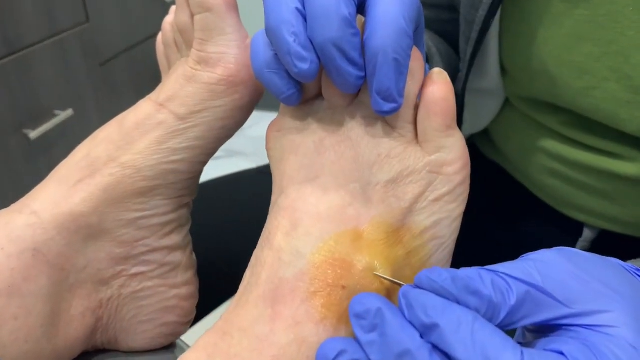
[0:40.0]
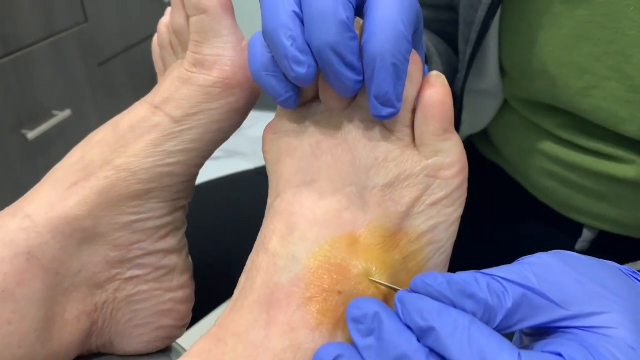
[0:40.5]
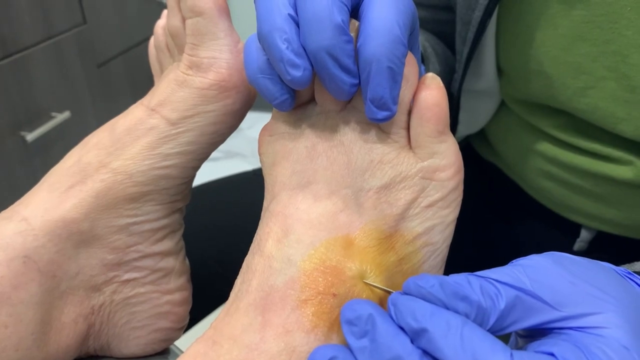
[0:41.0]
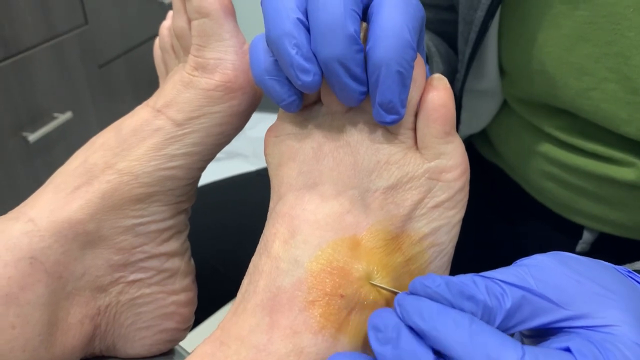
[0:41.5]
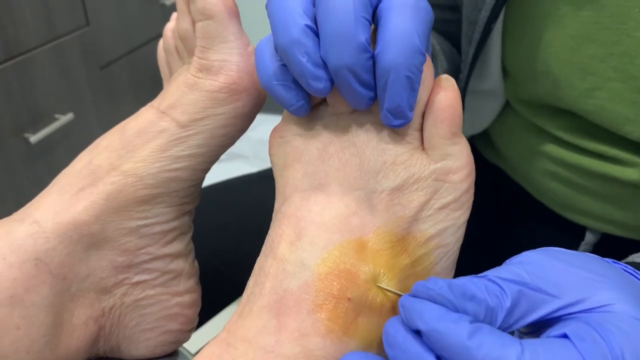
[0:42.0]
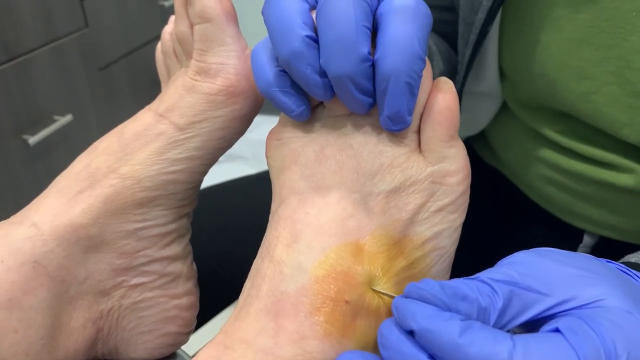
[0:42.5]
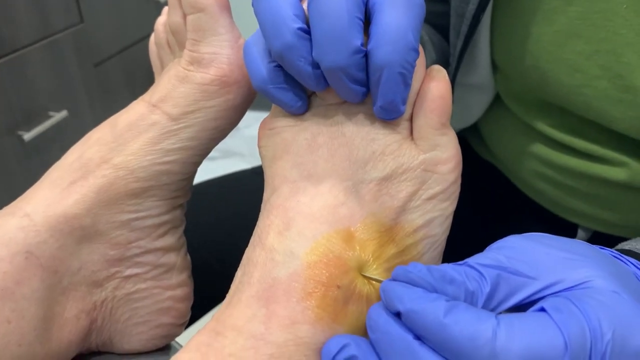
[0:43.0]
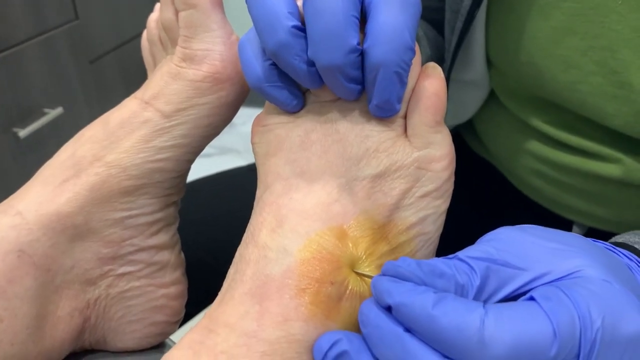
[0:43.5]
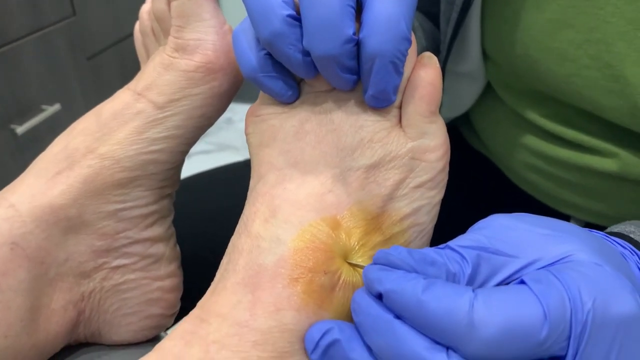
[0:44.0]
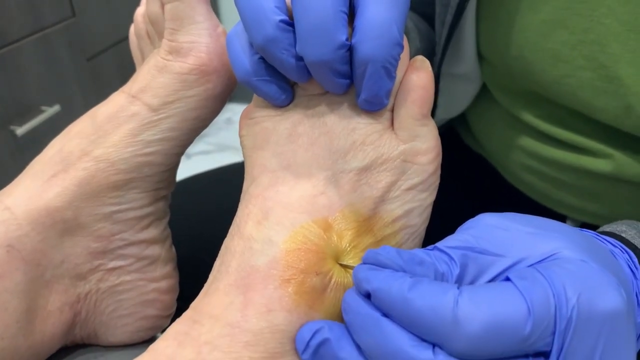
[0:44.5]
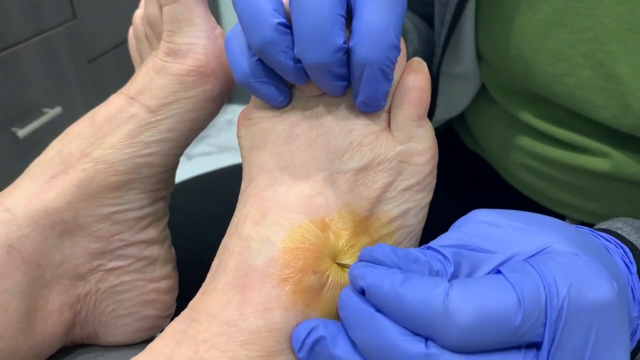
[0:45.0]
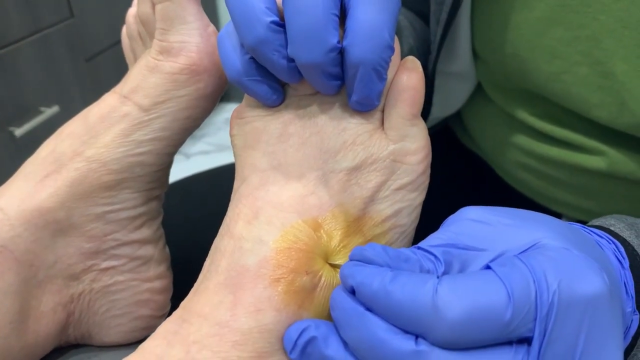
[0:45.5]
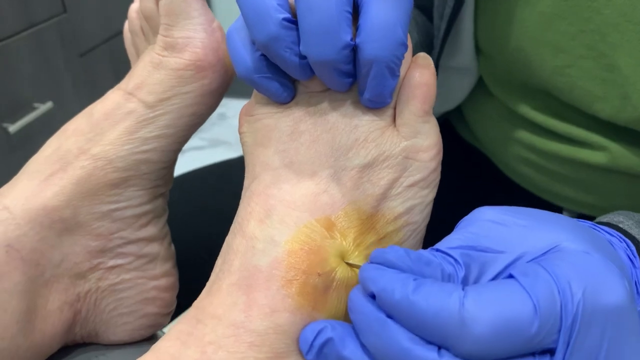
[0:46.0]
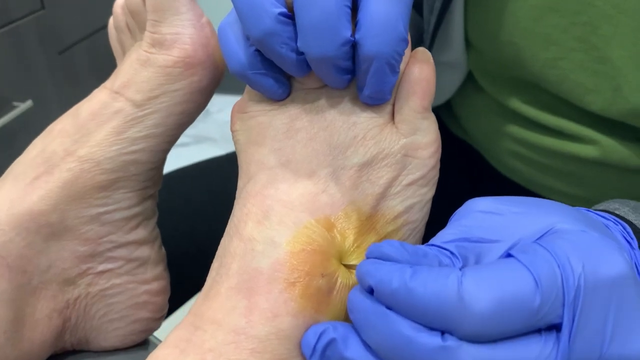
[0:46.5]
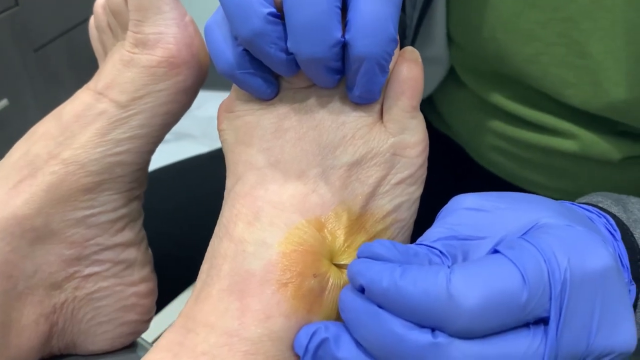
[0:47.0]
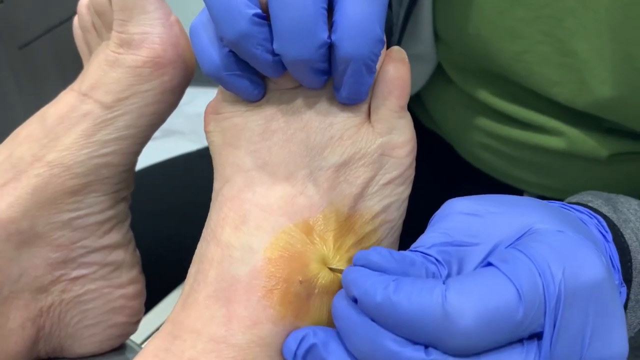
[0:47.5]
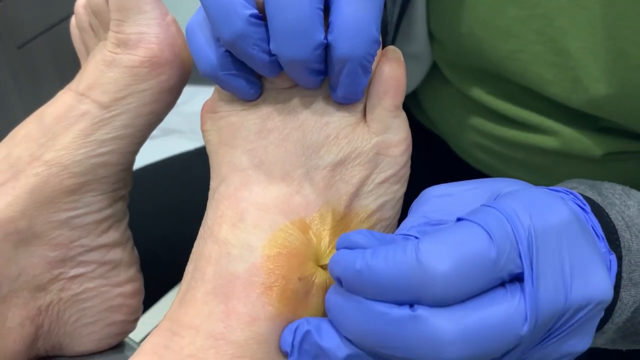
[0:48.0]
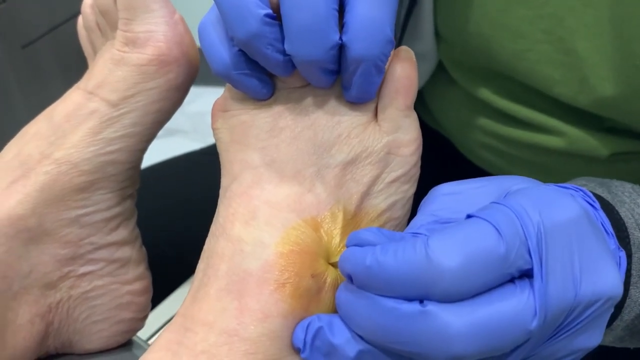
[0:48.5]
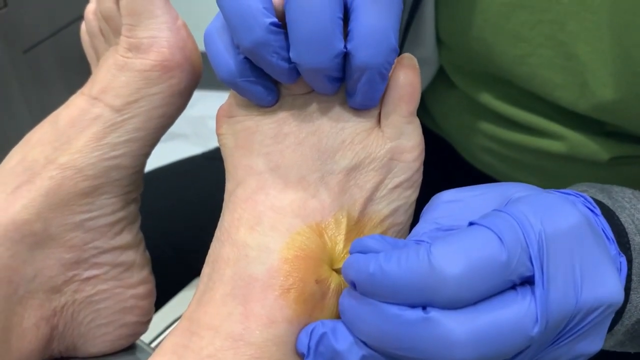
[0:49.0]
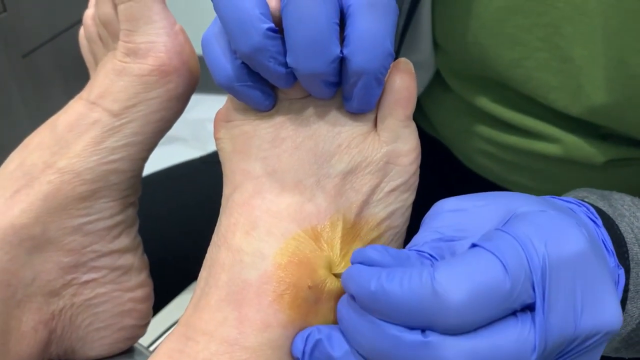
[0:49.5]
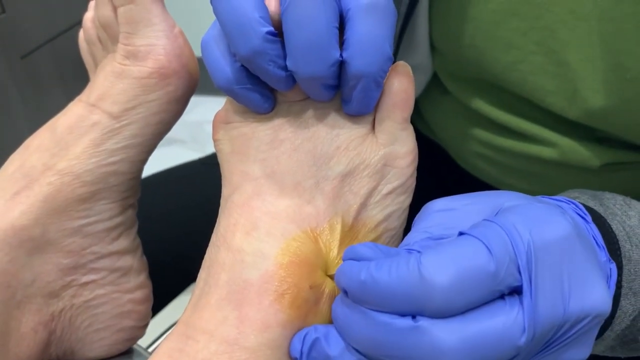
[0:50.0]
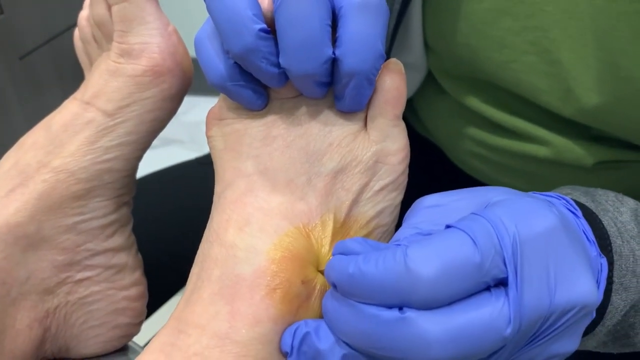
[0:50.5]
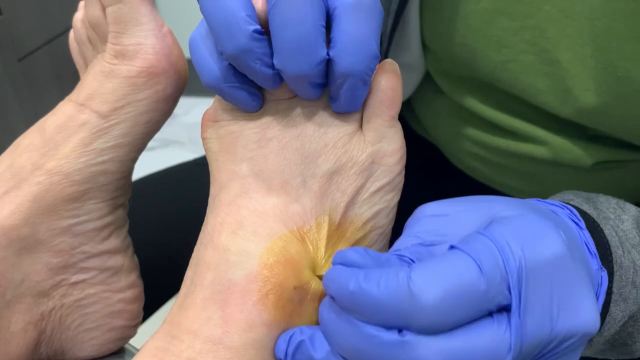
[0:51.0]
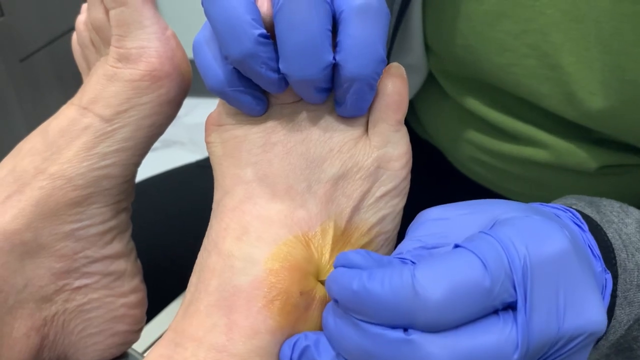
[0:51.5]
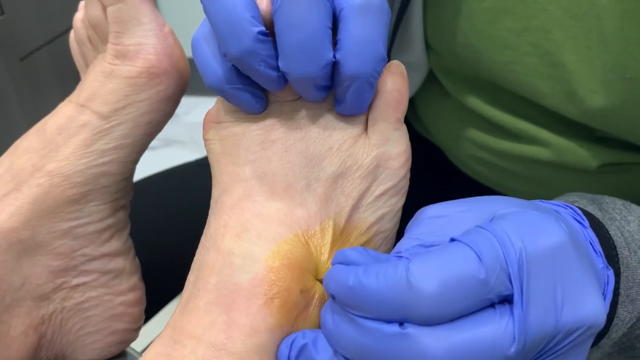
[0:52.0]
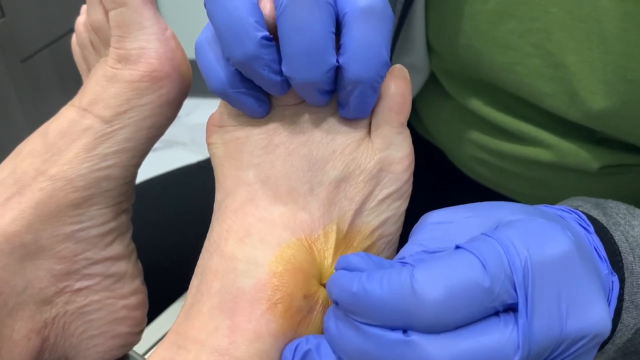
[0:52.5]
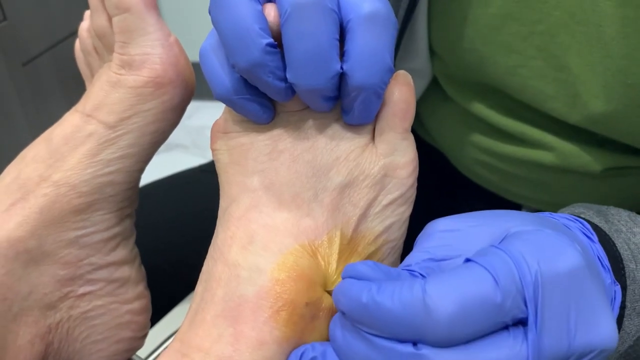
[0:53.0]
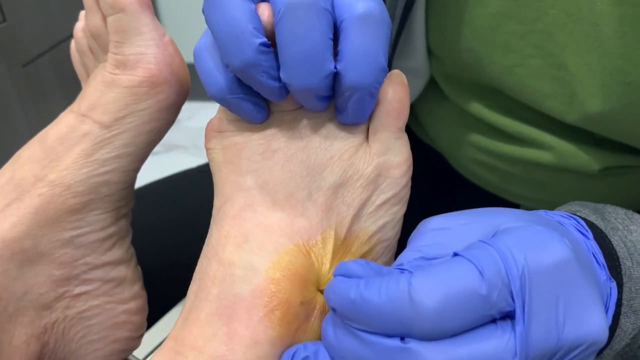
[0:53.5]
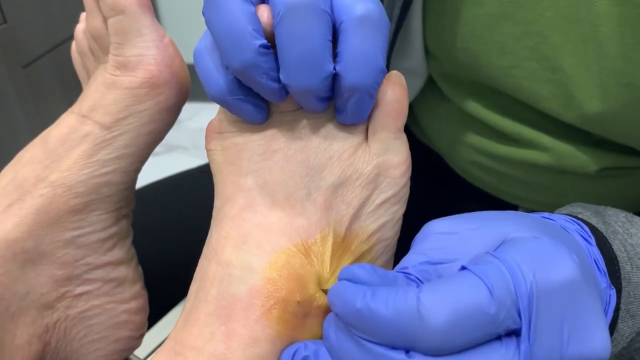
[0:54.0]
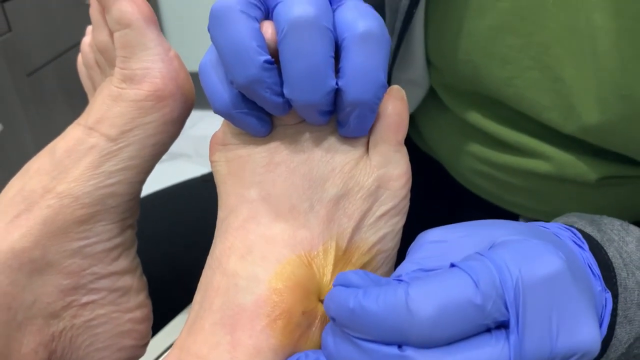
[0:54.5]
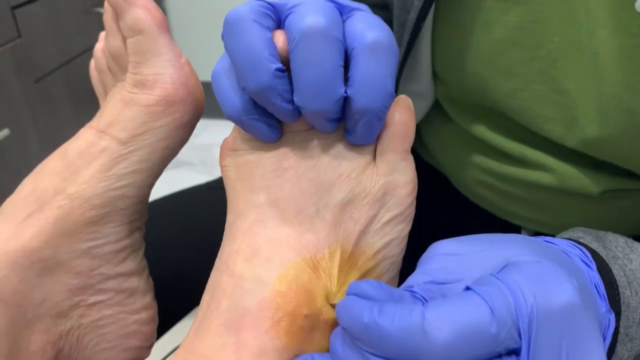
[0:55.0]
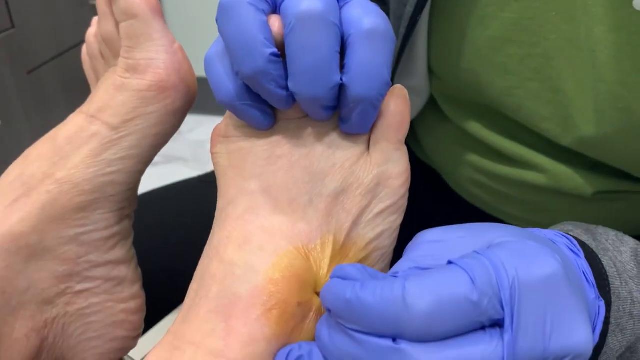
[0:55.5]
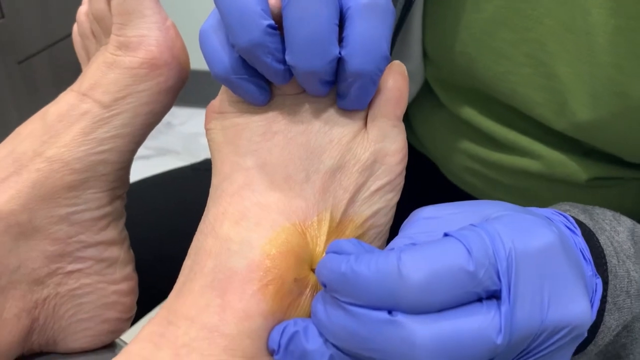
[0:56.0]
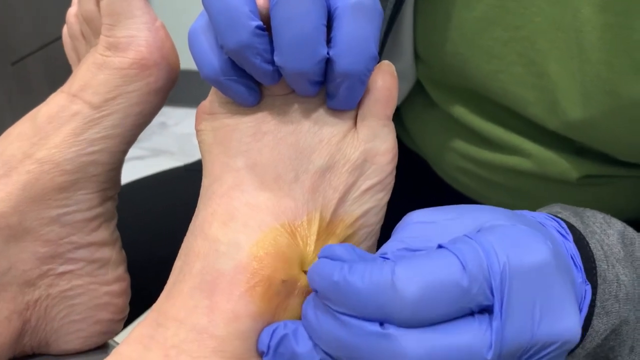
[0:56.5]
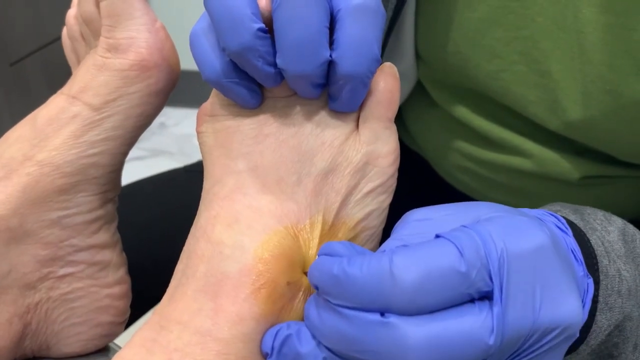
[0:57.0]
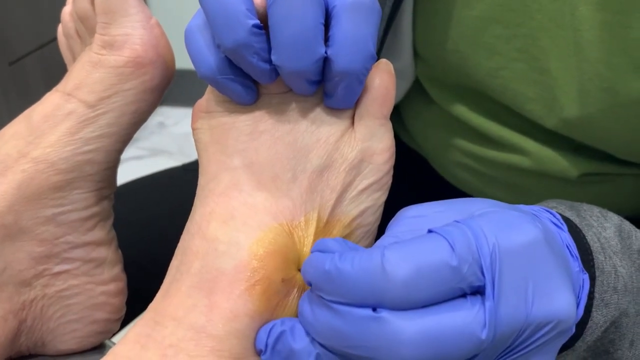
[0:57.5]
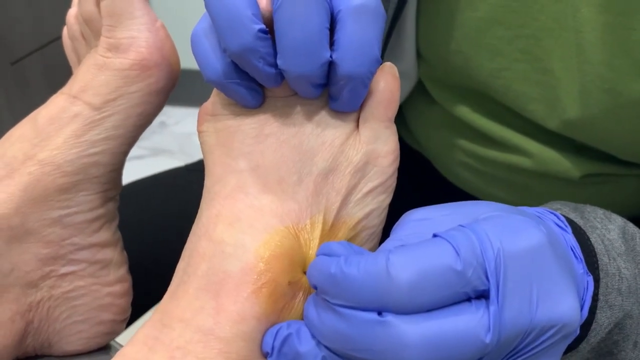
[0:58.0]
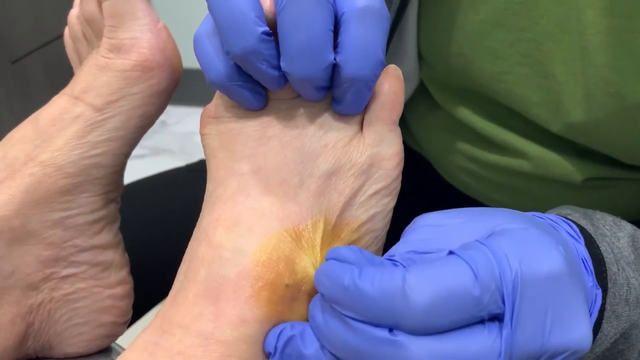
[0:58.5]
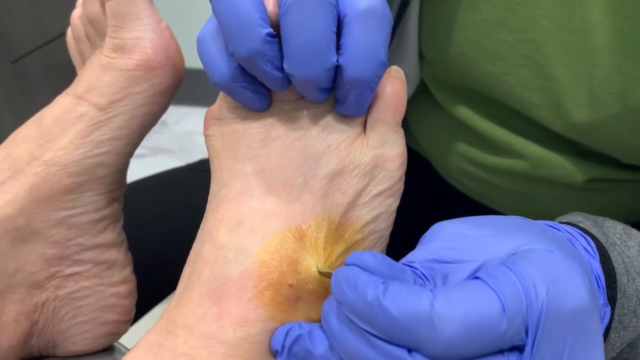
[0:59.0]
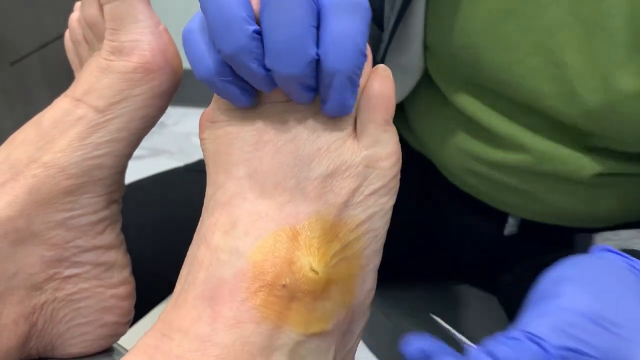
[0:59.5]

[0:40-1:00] The woman uses a medical needle, pushing it into the skin of the patient, who has a very yellow area of skin. She makes punctures in the skin. The patient is lying down.